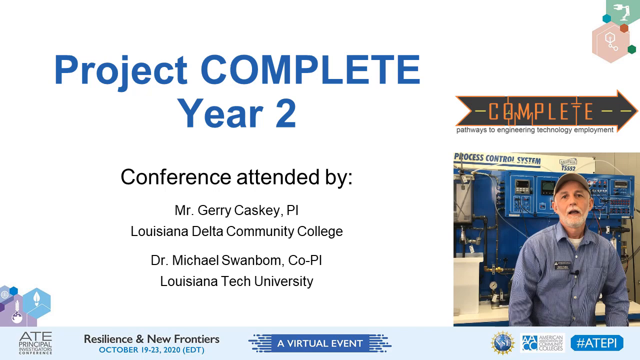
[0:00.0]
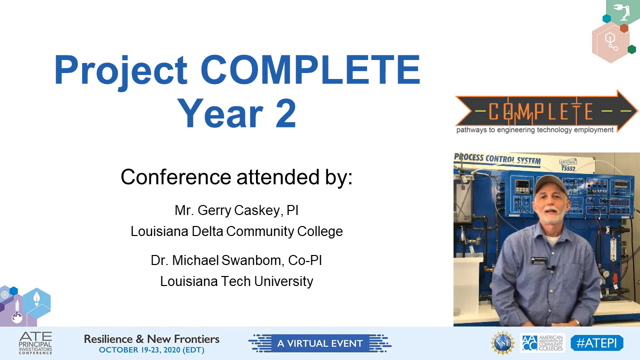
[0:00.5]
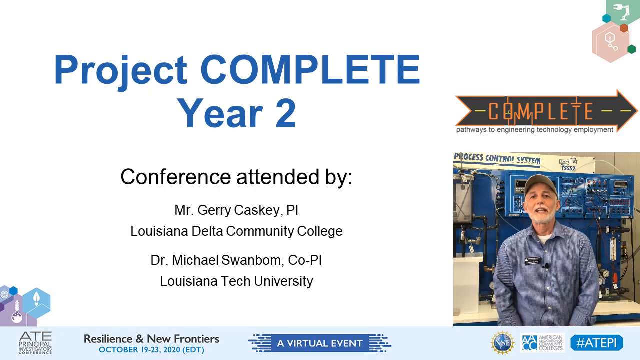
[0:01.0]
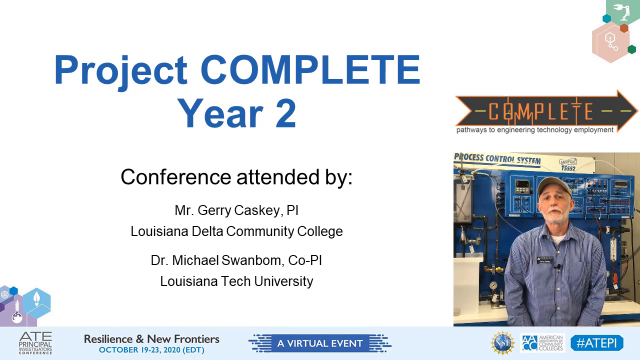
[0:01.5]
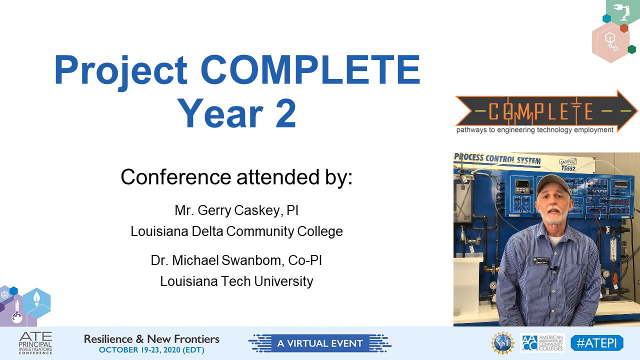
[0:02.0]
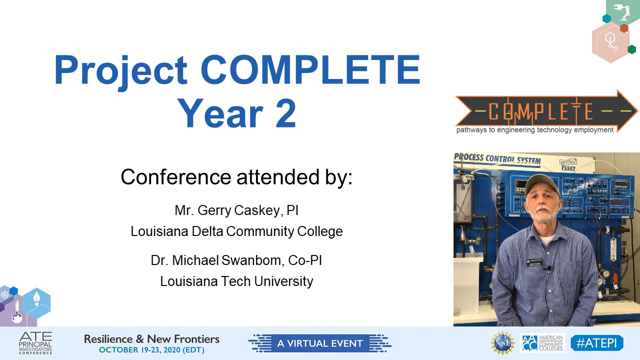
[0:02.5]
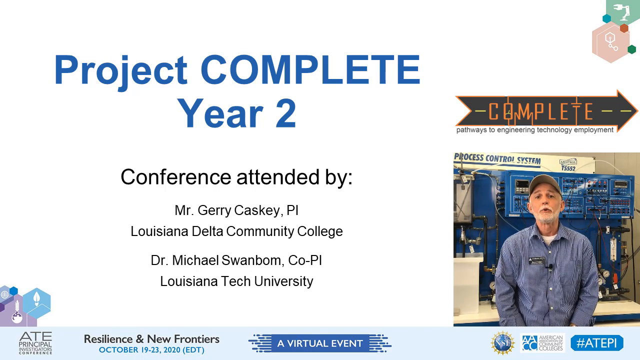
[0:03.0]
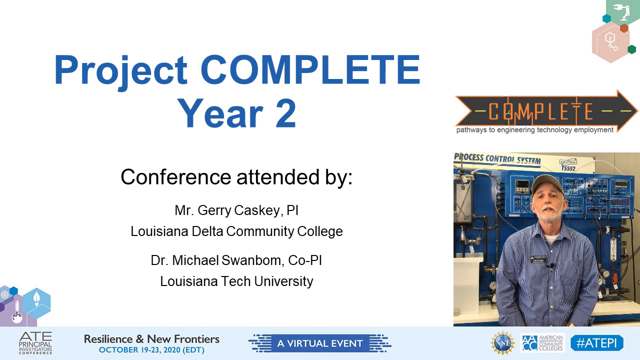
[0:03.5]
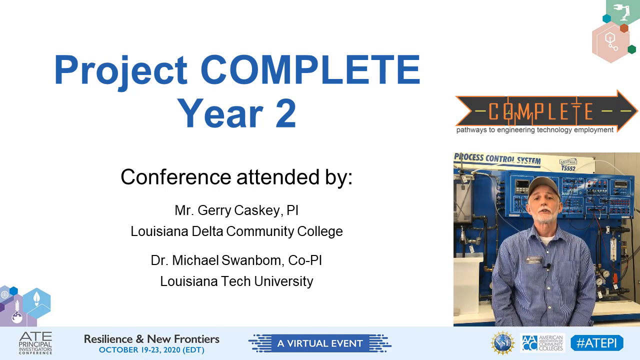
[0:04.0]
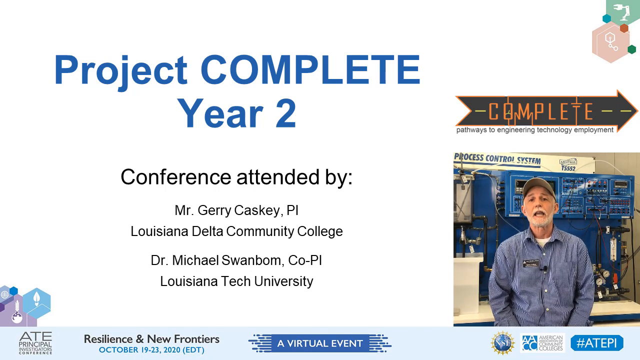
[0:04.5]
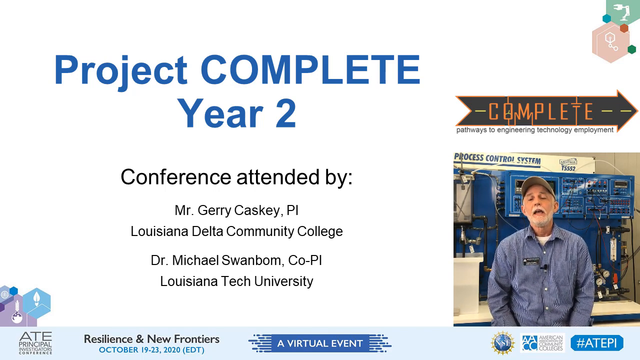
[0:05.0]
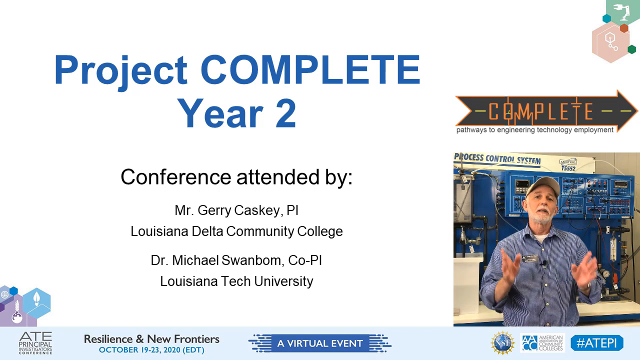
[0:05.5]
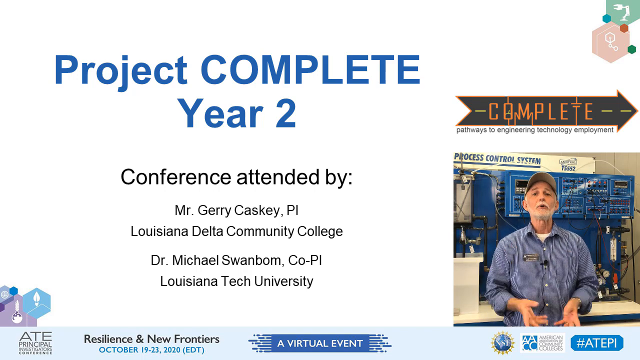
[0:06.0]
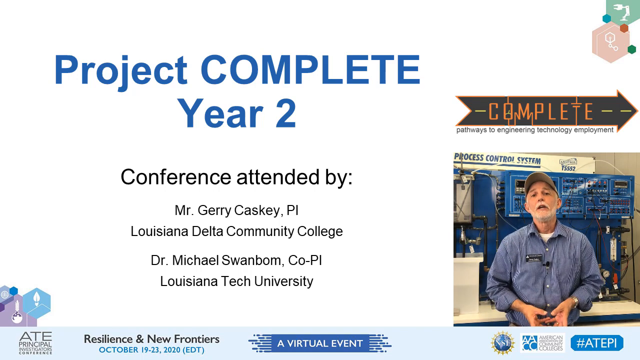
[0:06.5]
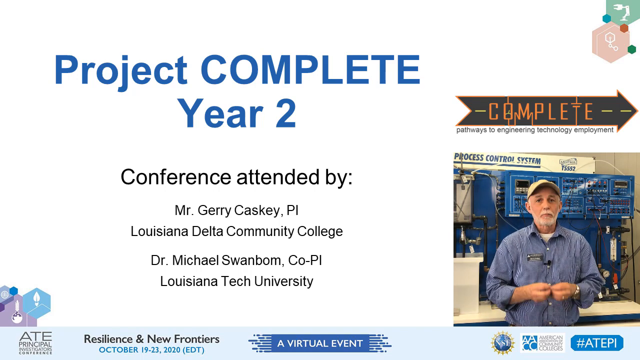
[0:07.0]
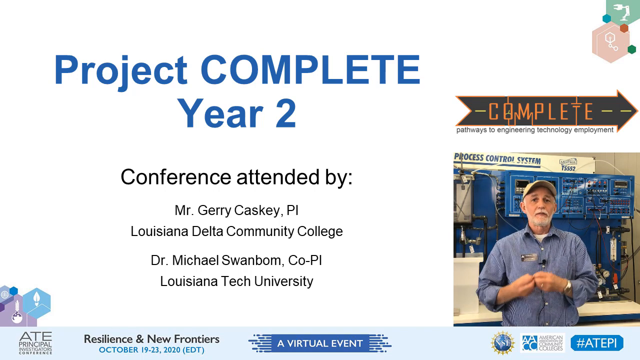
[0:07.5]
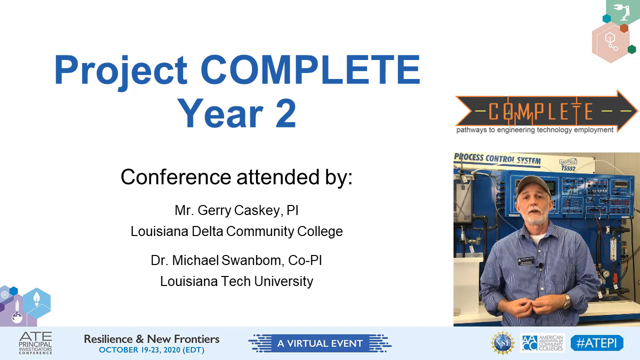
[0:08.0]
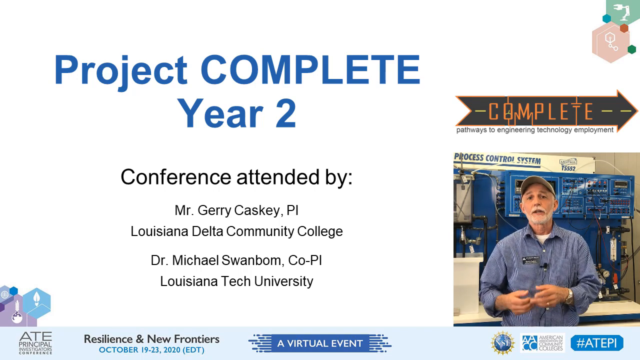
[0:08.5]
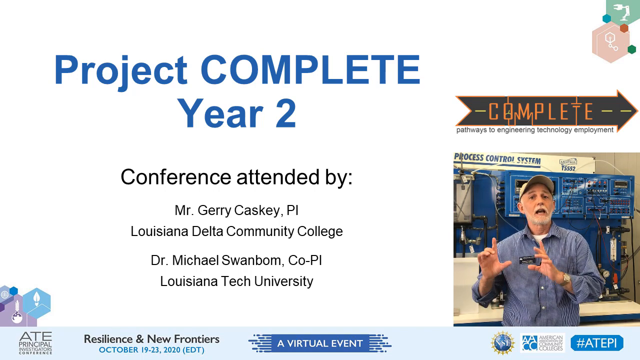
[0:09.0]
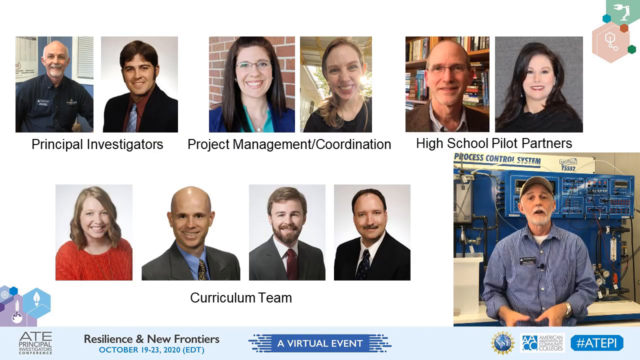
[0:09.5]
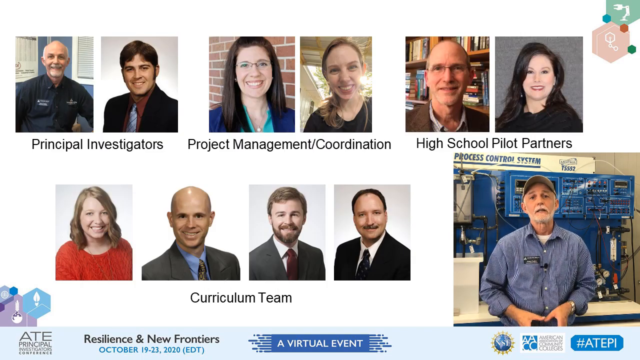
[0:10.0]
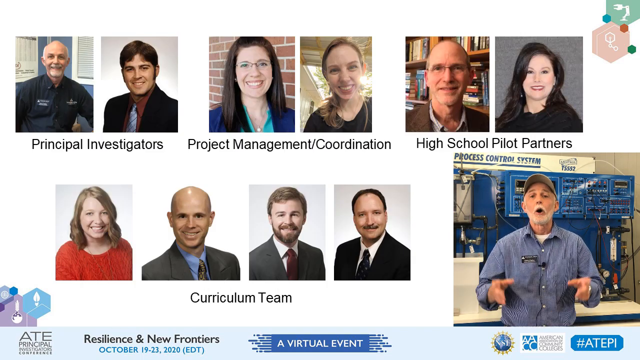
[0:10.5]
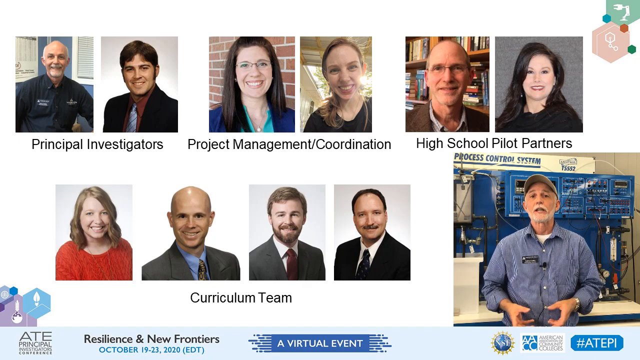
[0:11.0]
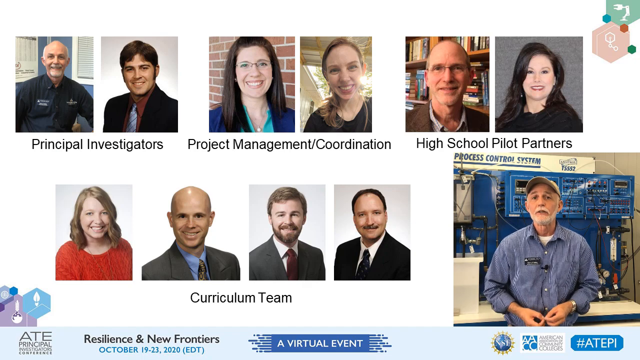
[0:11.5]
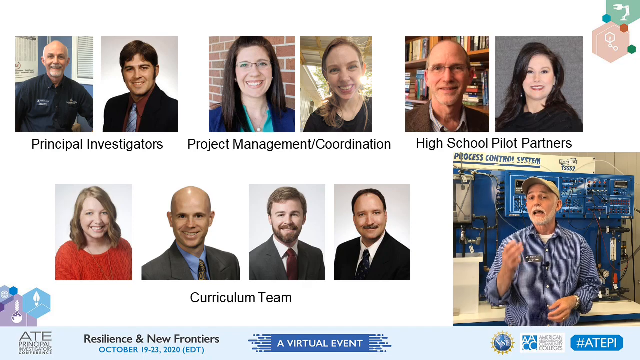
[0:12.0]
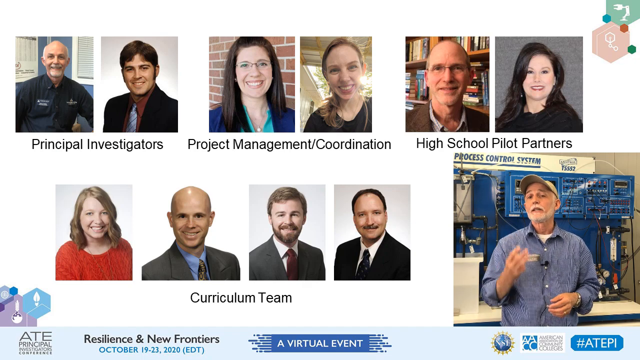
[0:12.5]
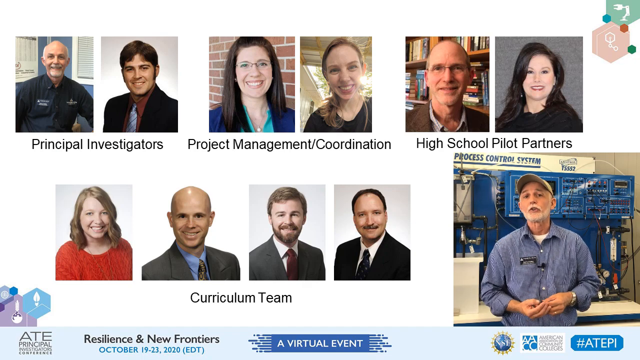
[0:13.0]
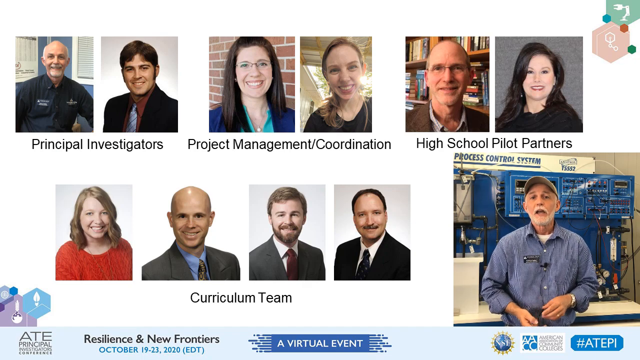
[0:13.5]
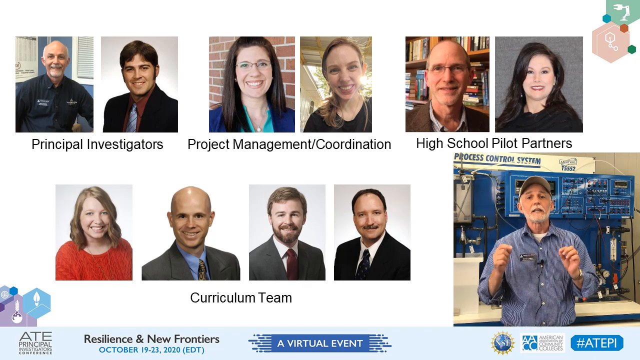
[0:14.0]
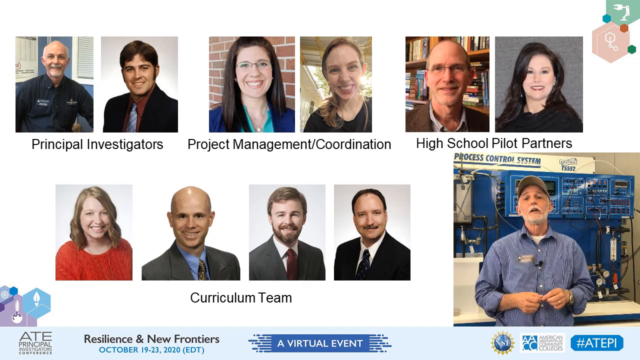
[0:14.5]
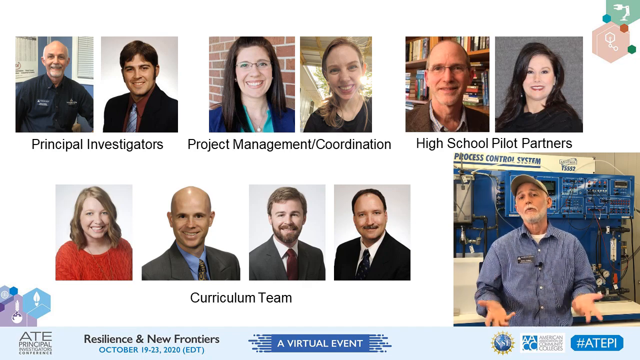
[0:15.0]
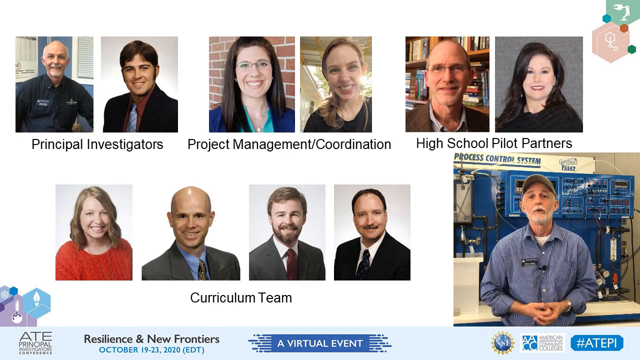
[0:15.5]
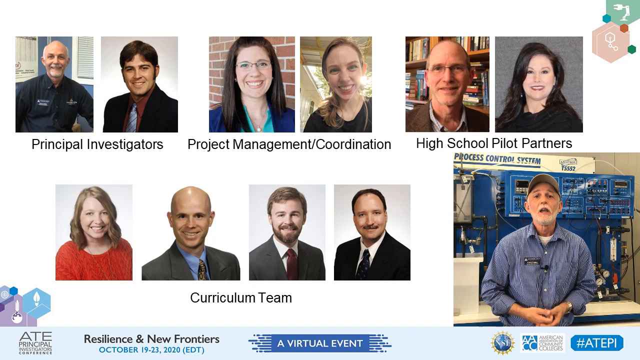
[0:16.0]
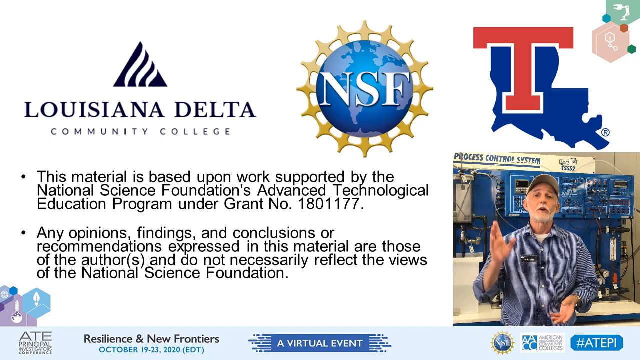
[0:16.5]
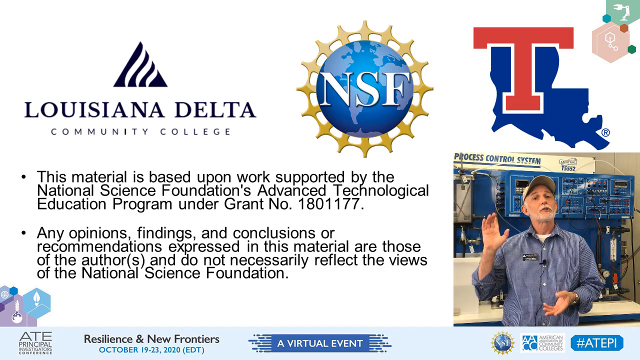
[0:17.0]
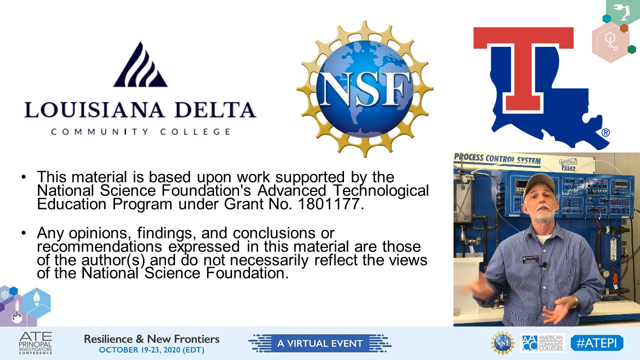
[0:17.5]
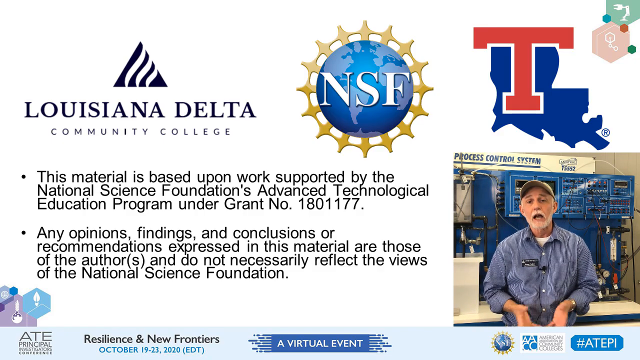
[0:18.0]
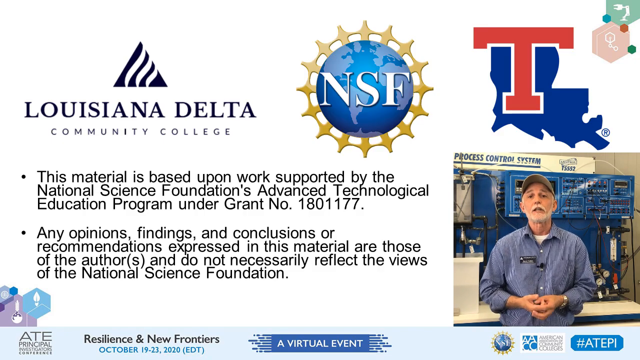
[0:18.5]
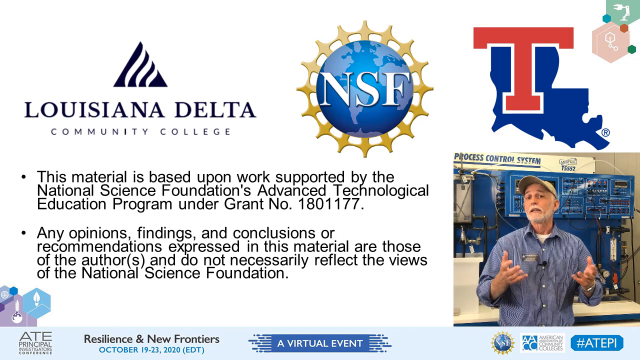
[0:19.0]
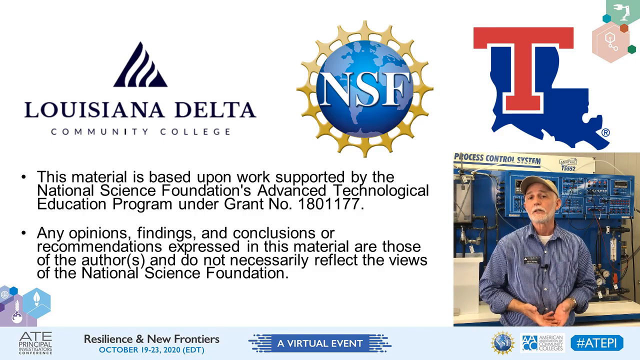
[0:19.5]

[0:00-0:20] A title reading "project complete year two" appears in blue text on a white screen background, and the video shows a conference, with "conference attended by" followed by some names. An older man with a gray beard, probably around 50 to 60, wearing a blue shirt and a hat, is shown next to what may be an engineering or mechanical object. He remains in frame as more people are shown under the headings principal investors, project management coordination team, high school pilot partners and the curriculum team. These people wear different outfits and are a mix of women and men, with at least 10 of them visible. The screen then changes to one showing Louisiana Delta and some related text, while the older man in the blue shirt with grayish hair is still shown in the bottom right corner, talking.